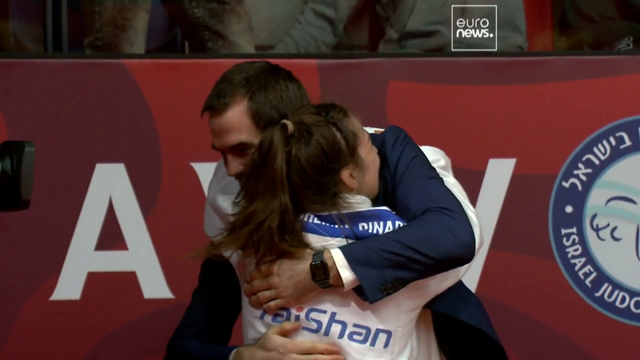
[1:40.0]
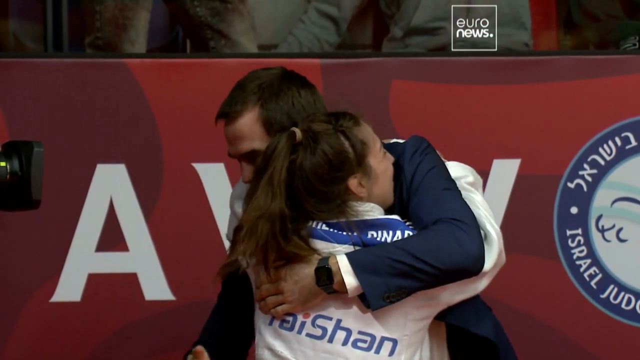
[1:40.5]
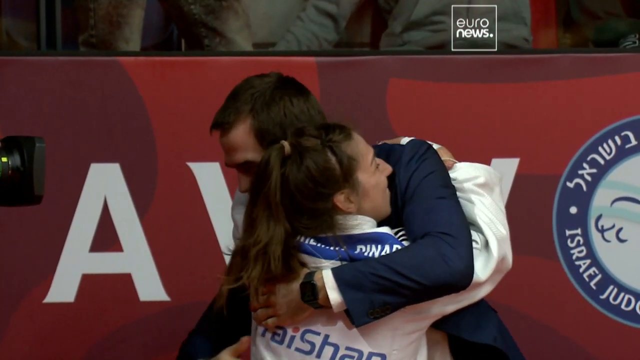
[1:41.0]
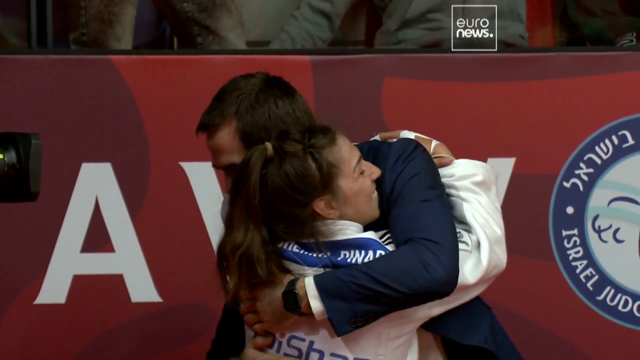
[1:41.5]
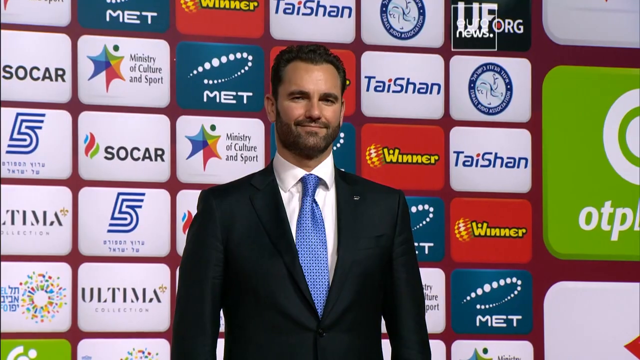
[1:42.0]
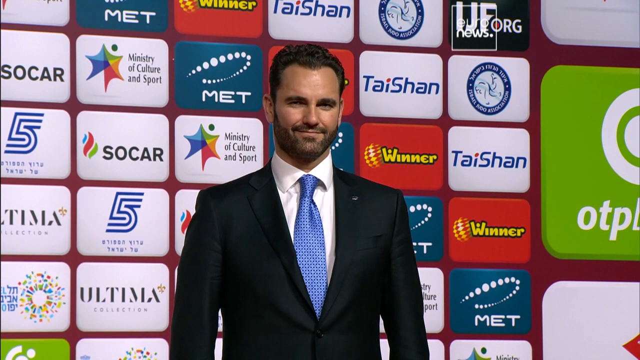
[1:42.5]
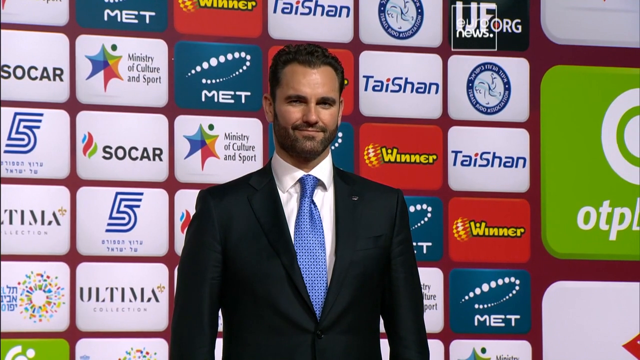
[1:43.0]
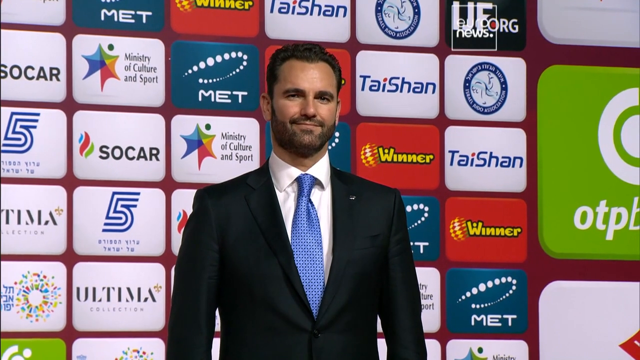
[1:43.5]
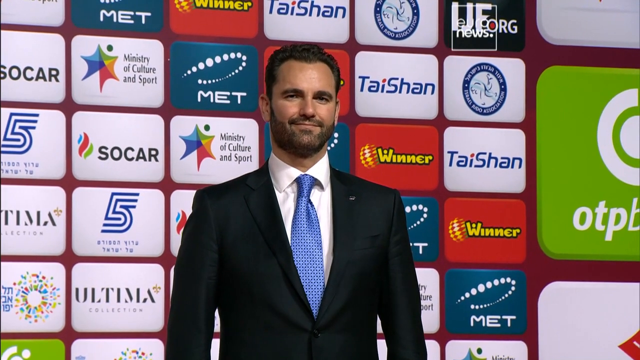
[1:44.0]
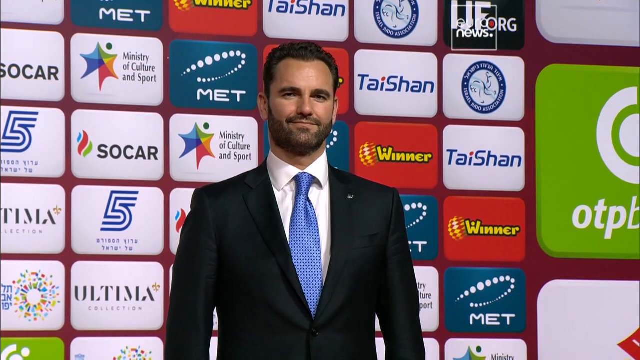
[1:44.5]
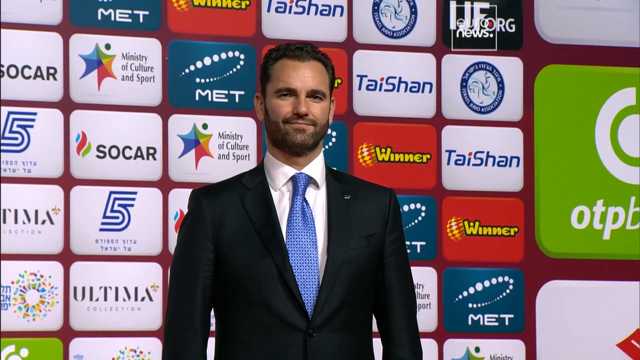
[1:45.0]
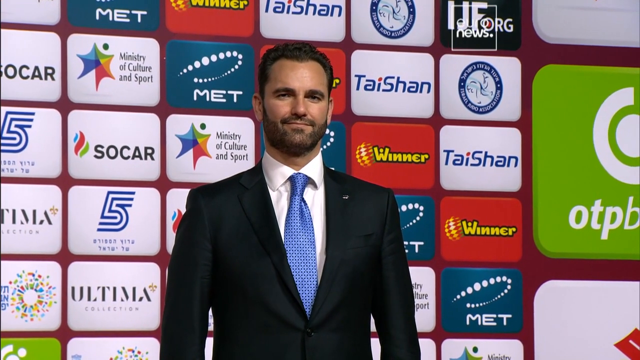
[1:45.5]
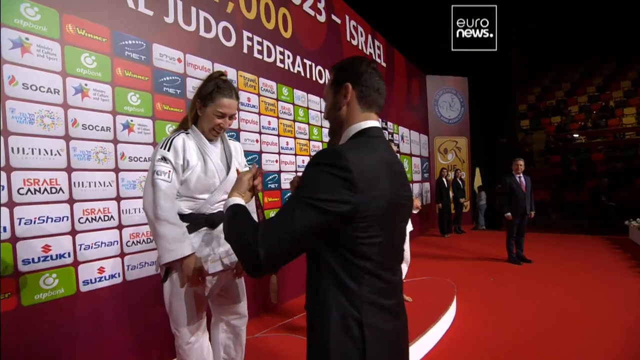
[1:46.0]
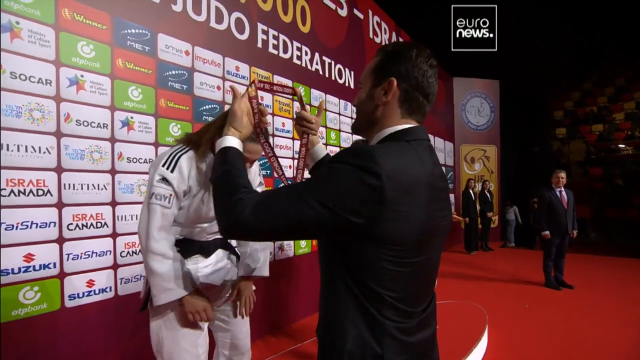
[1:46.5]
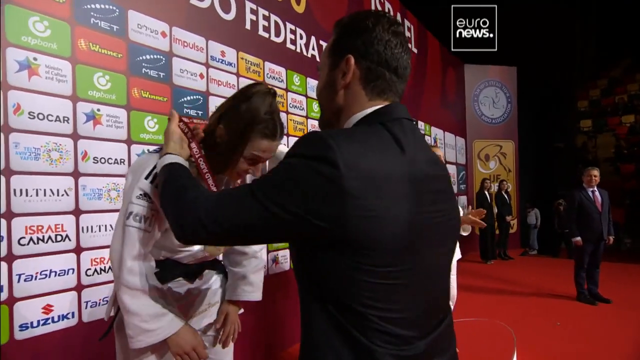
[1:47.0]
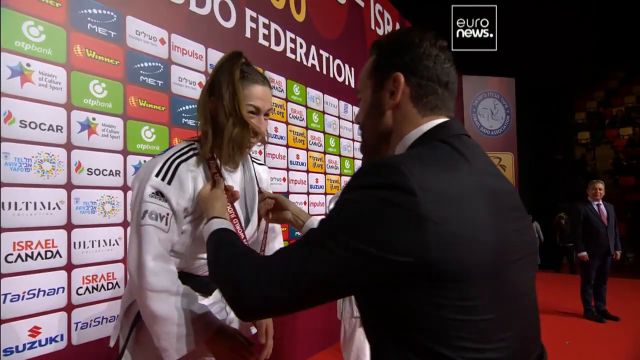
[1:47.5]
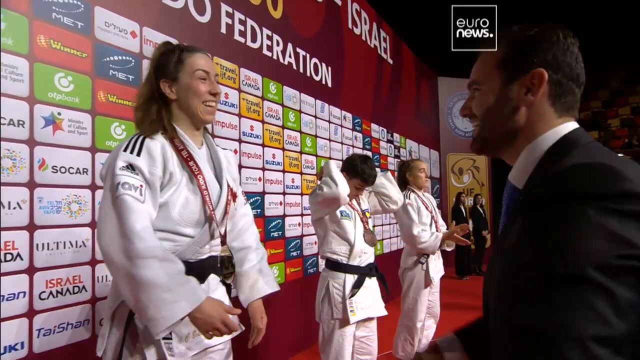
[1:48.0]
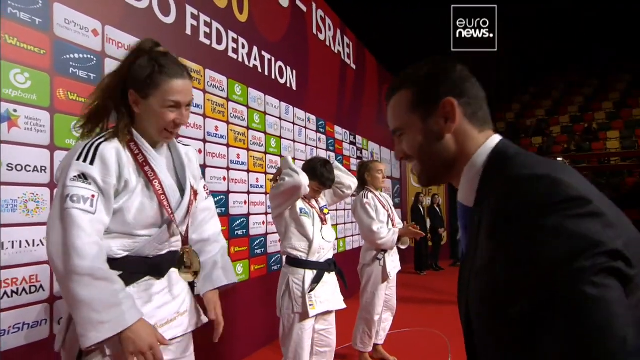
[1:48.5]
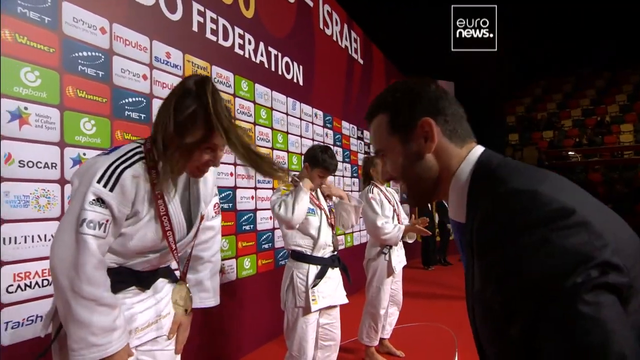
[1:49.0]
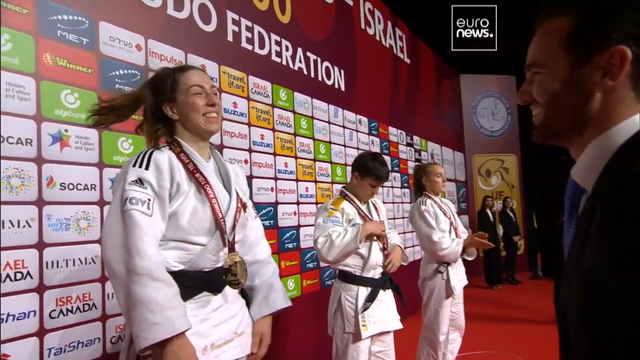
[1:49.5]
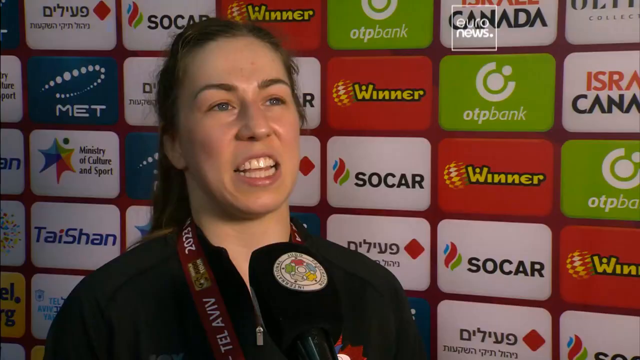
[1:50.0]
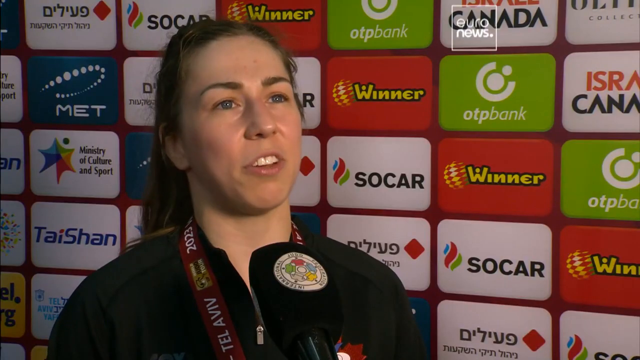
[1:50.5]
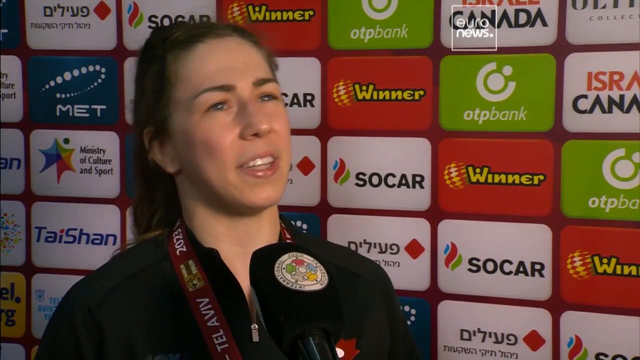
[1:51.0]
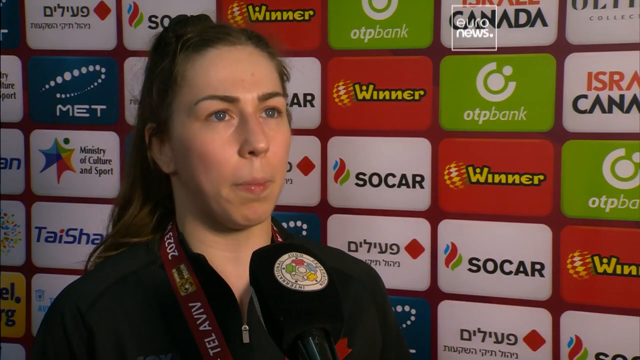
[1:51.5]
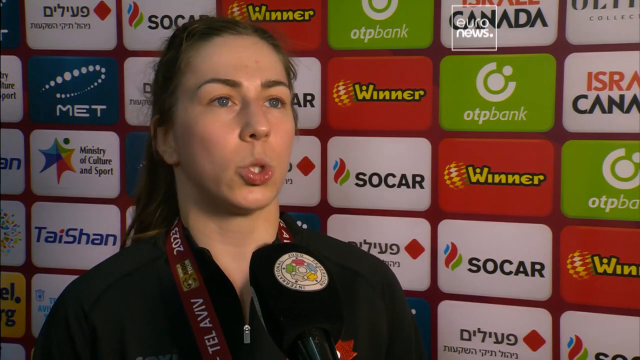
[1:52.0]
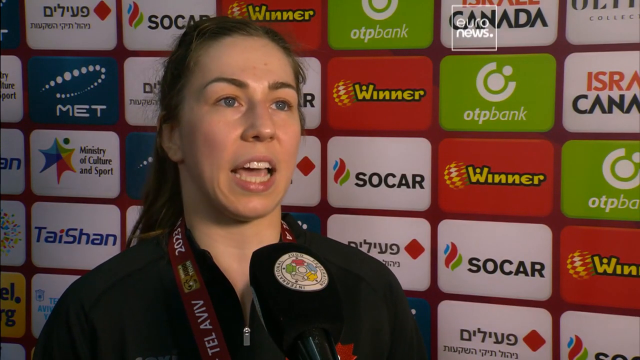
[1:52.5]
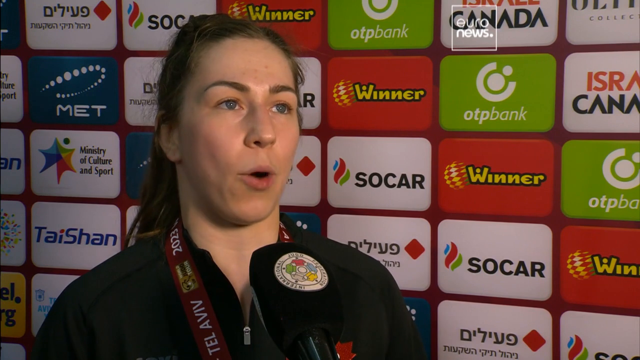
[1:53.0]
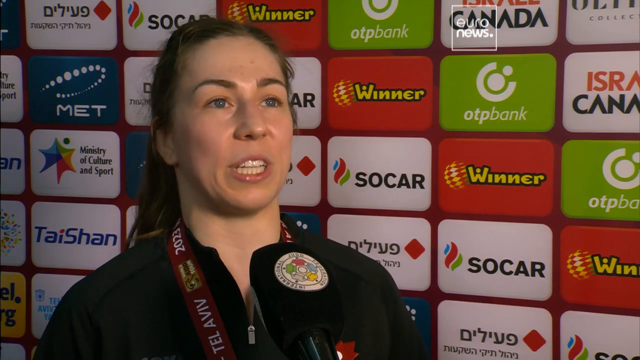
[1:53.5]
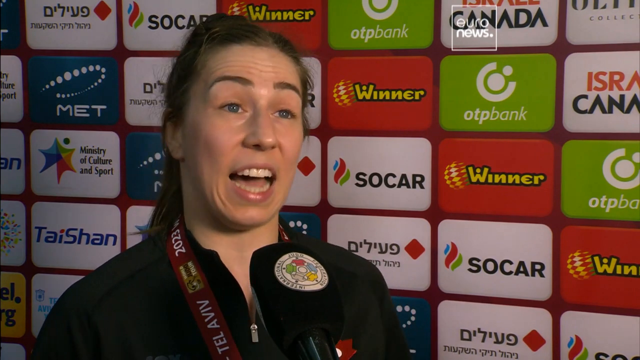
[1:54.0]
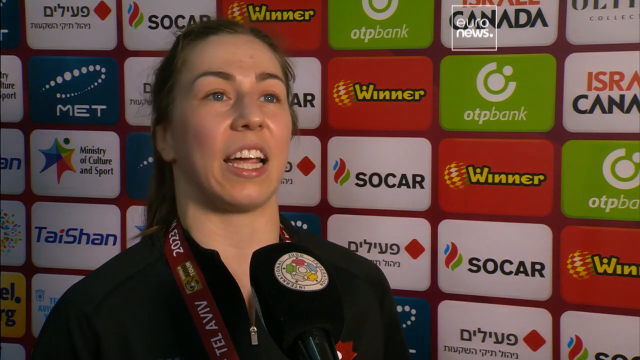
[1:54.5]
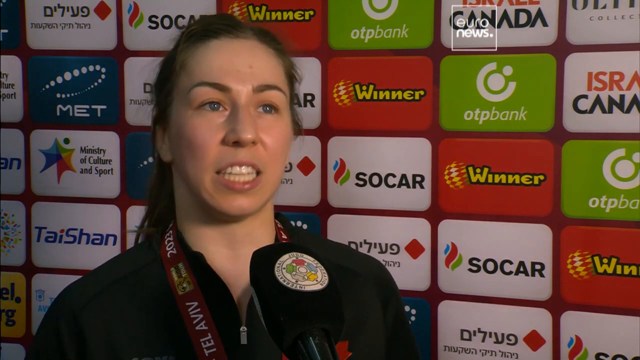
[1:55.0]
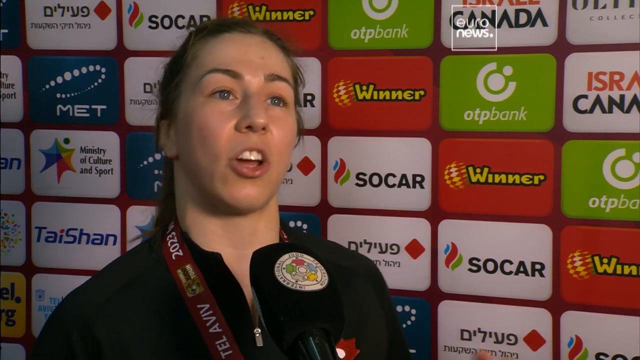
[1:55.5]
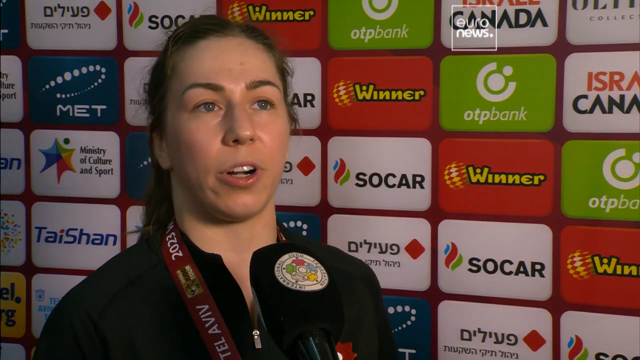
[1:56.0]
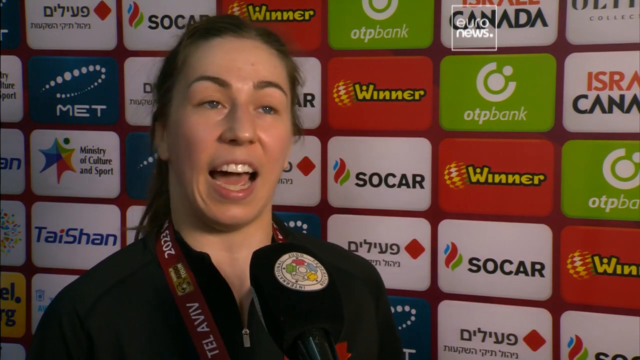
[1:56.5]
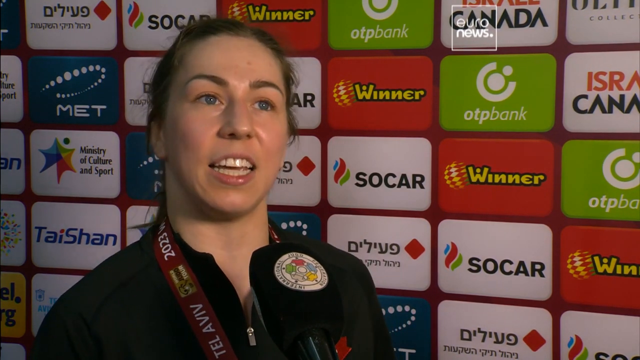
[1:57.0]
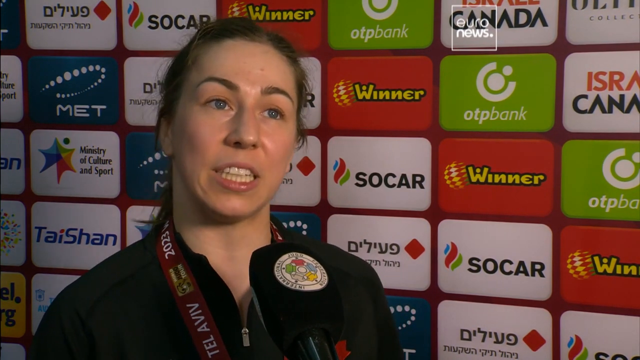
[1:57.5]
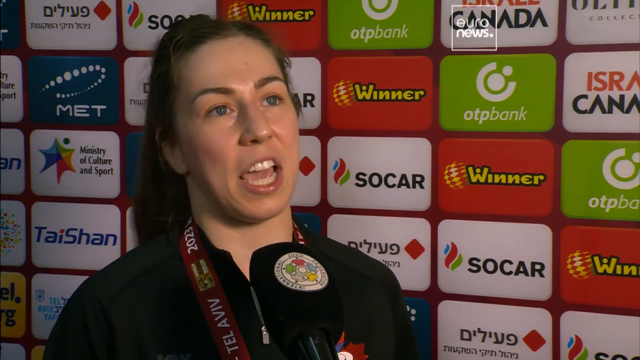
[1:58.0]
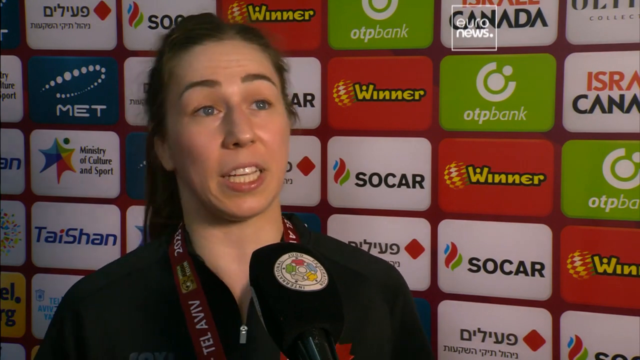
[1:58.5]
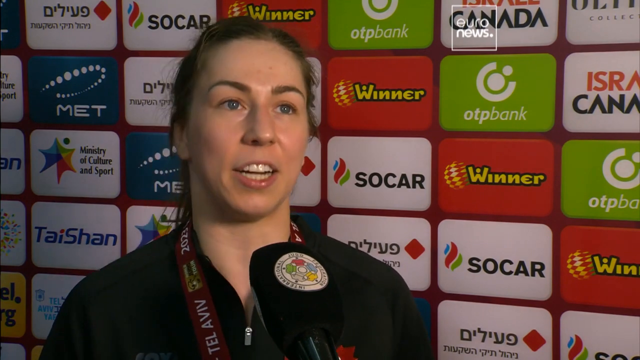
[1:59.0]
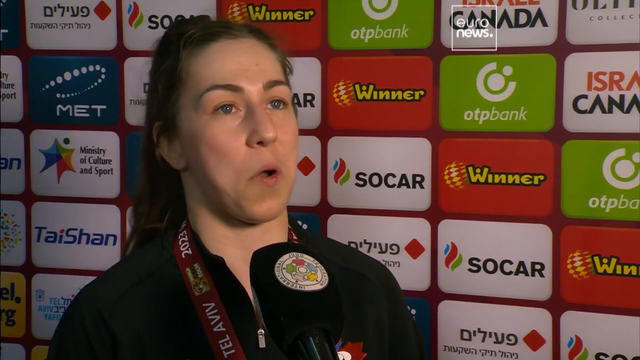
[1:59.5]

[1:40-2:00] The Canadian athlete hugs her coach, and the video cuts to a man who appears to be a coach. A man stands in front of an advertising board showing advertisements including "Taishan", "Met", "Socar" and "Ultima"; he wears a black suit and a blue tie, appears to be in his late 30s or early 40s, and has a brownish beard and brown hair. The female judo athlete from Canada stands on a podium and has a medal put around her neck; the man from in front of the advertising board bows to her, and she bows back. Two other athletes next to her also wear medals, possibly the silver and bronze medalists. She is then shown talking, wearing a black shirt, with a badge around her neck whose band says "Tel Aviv 2023".